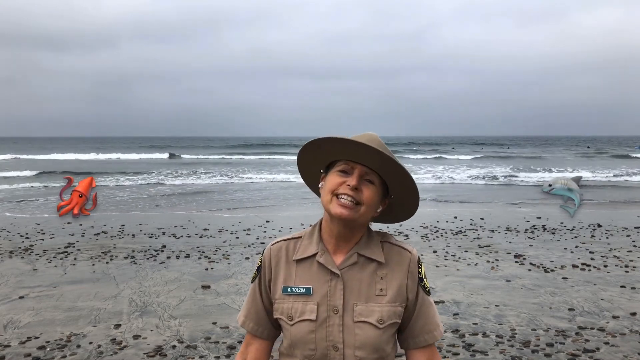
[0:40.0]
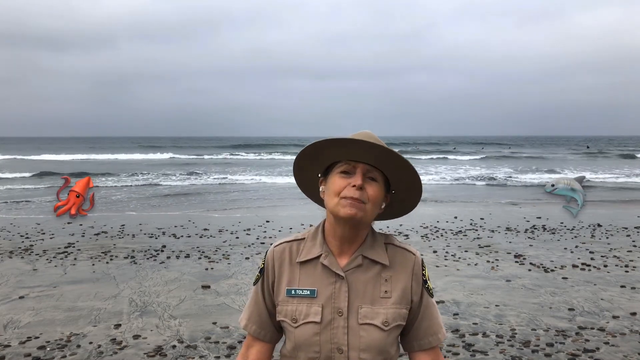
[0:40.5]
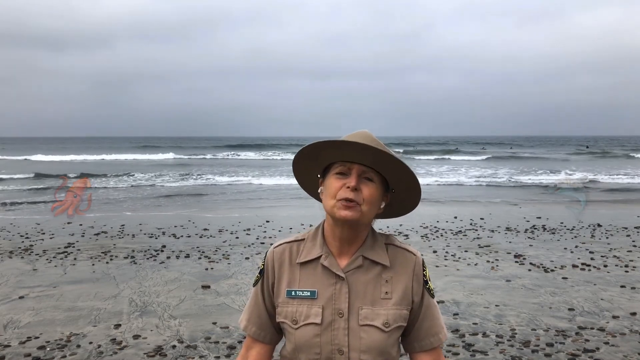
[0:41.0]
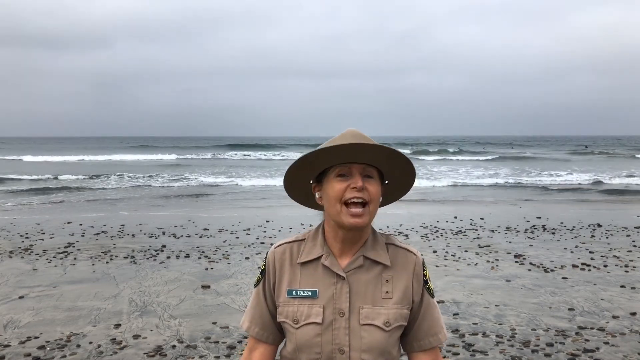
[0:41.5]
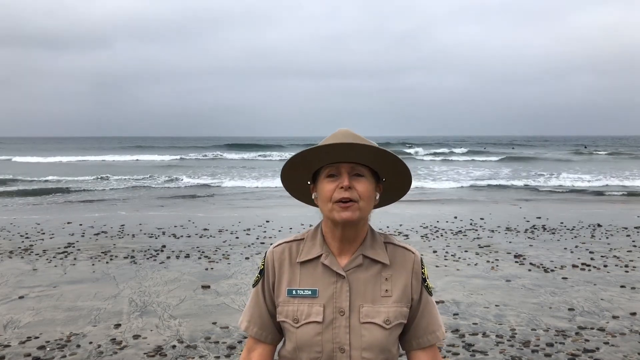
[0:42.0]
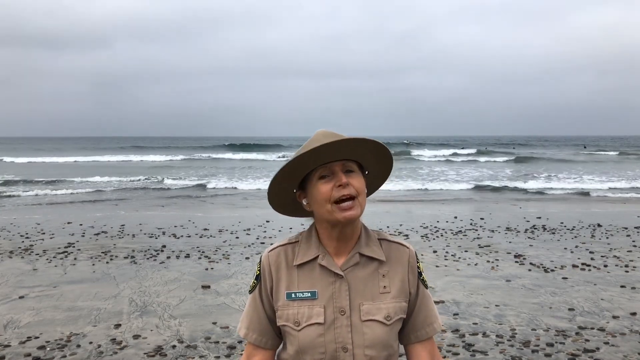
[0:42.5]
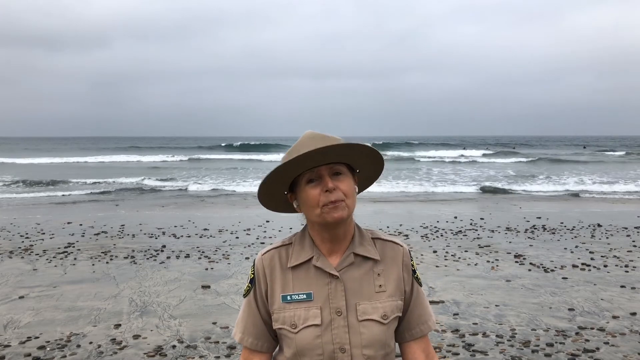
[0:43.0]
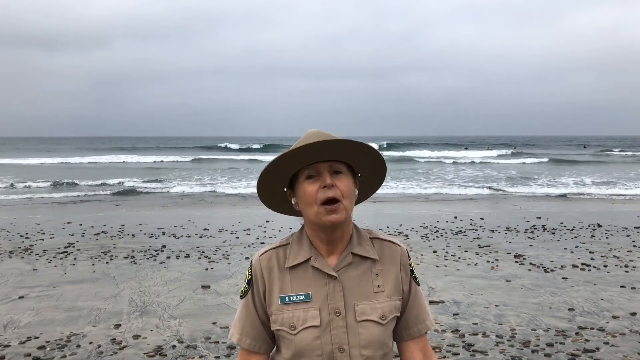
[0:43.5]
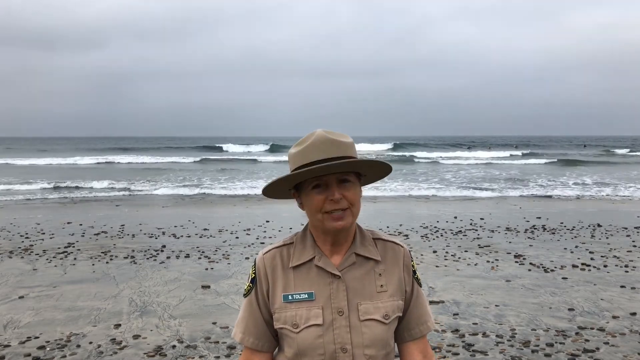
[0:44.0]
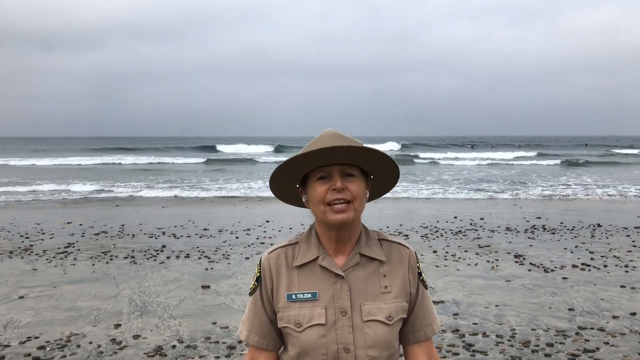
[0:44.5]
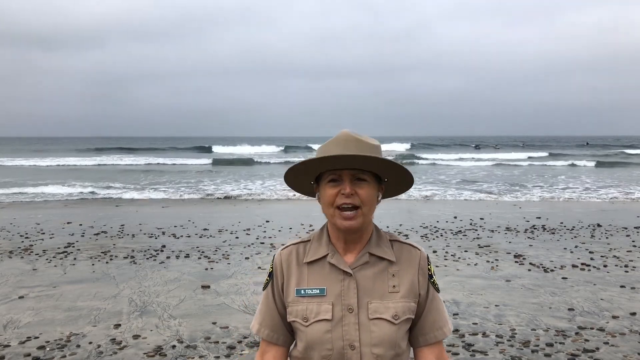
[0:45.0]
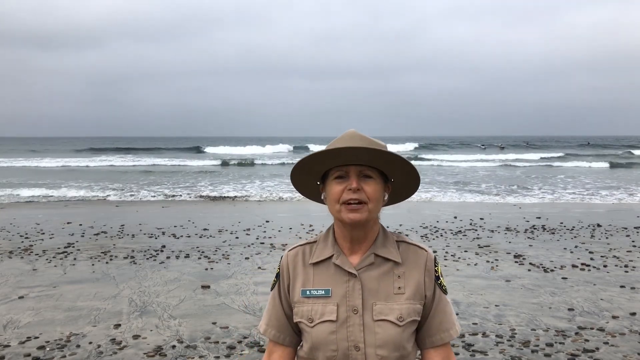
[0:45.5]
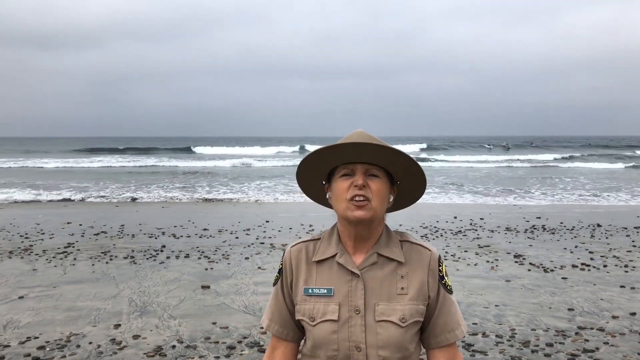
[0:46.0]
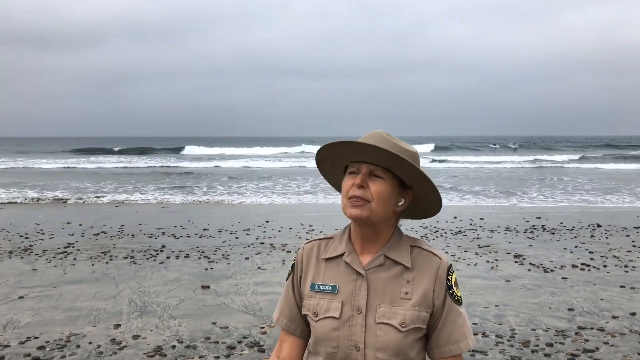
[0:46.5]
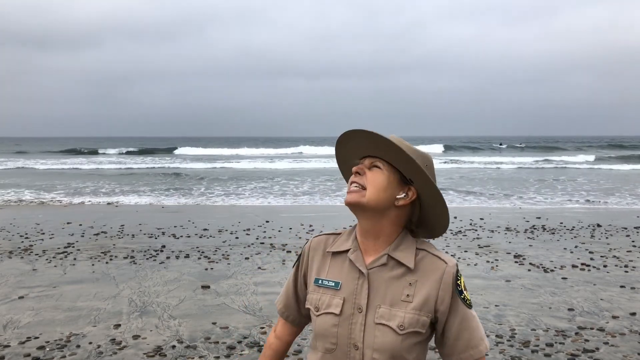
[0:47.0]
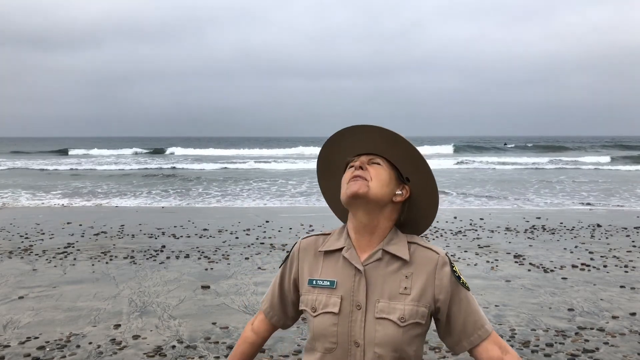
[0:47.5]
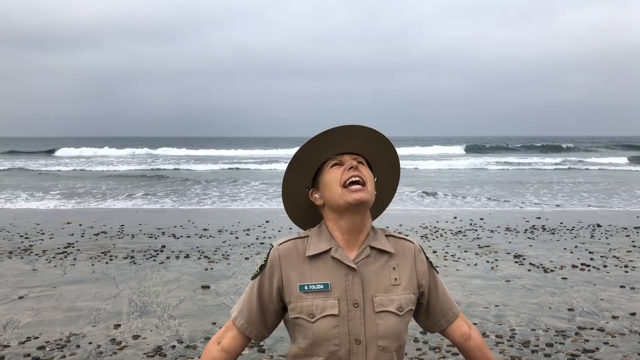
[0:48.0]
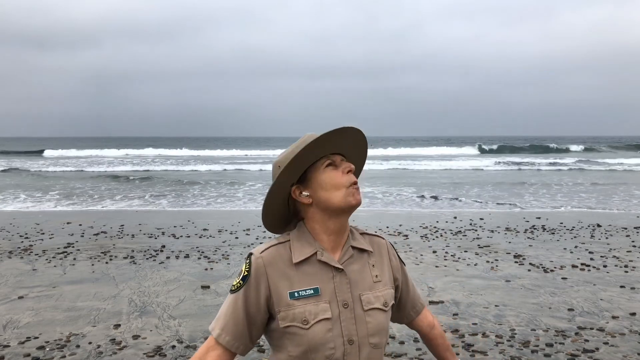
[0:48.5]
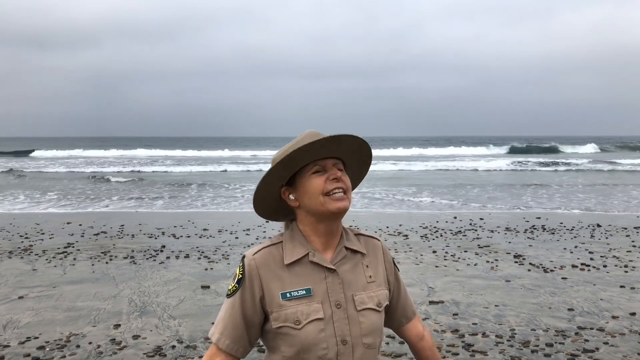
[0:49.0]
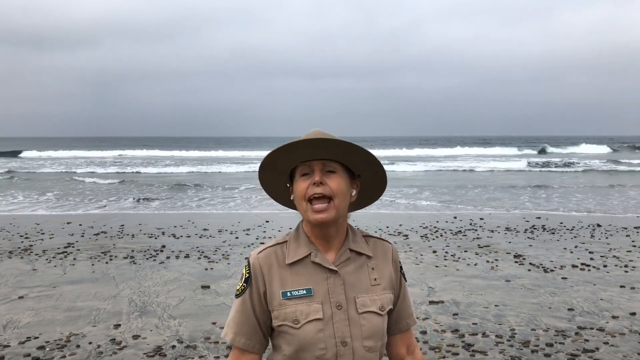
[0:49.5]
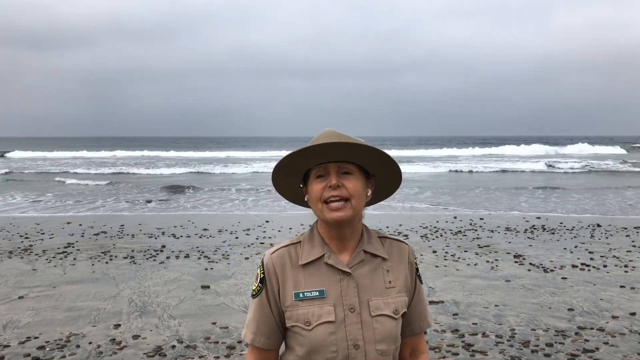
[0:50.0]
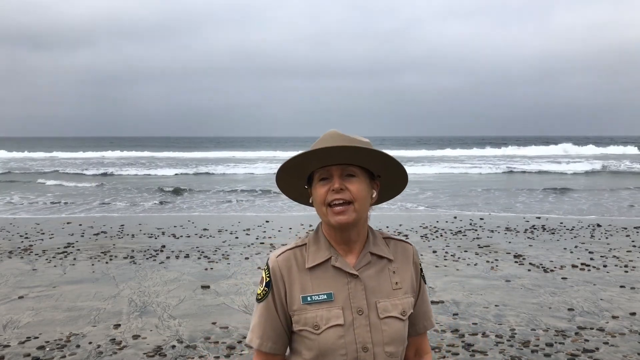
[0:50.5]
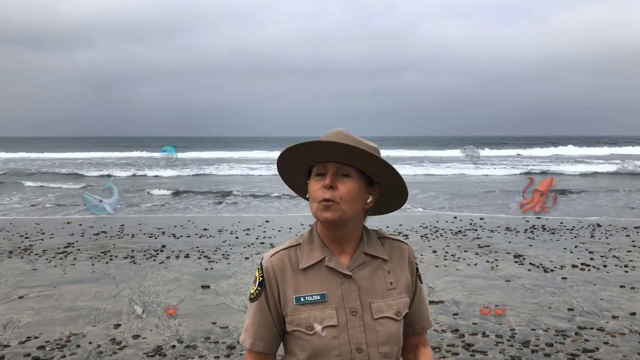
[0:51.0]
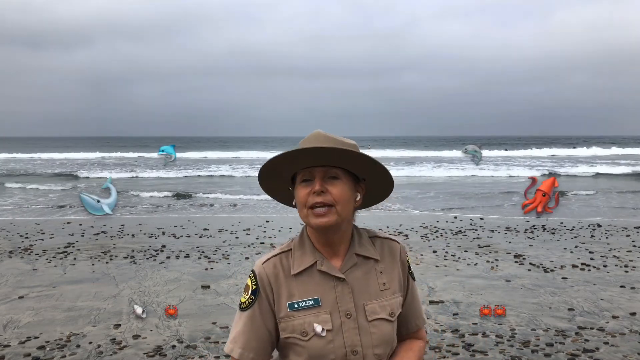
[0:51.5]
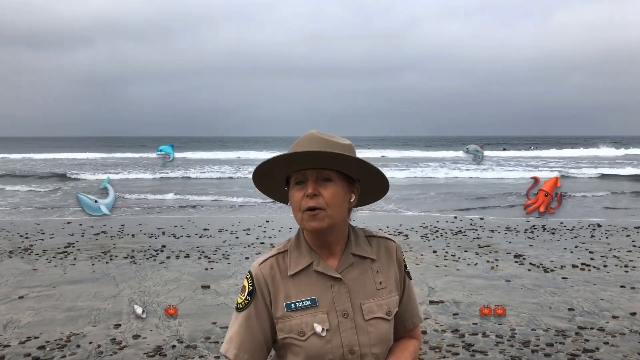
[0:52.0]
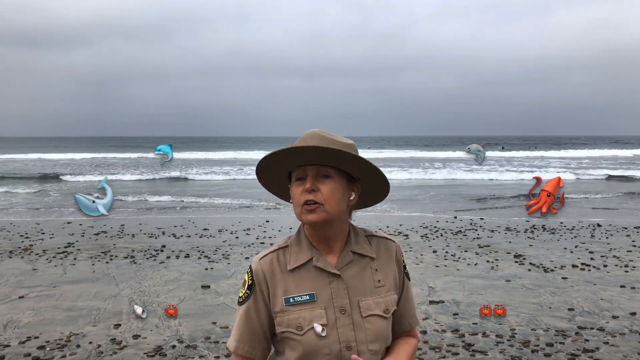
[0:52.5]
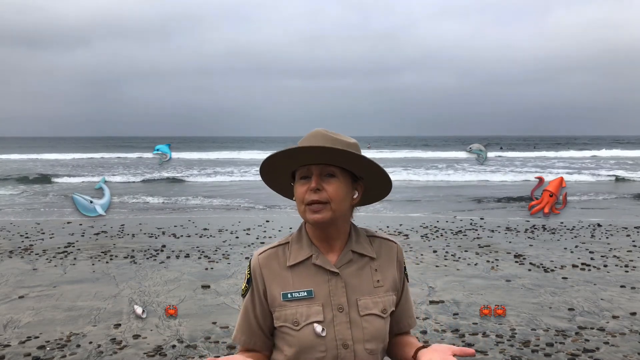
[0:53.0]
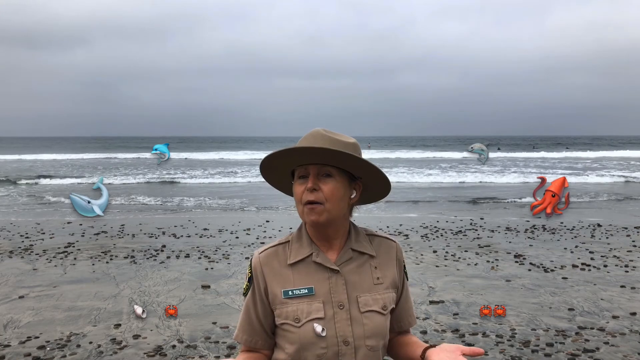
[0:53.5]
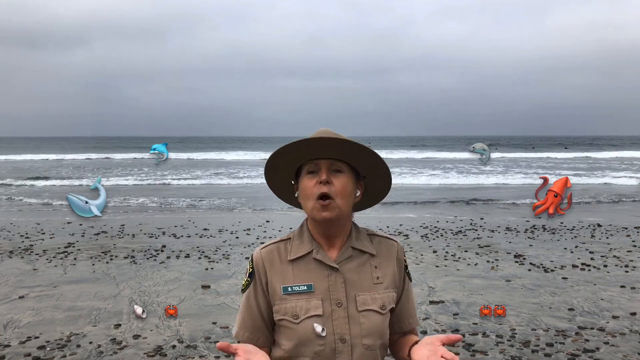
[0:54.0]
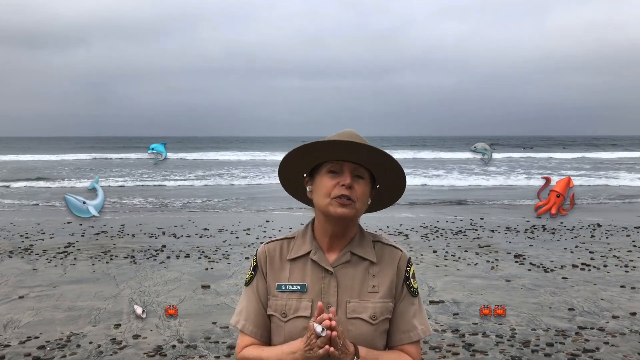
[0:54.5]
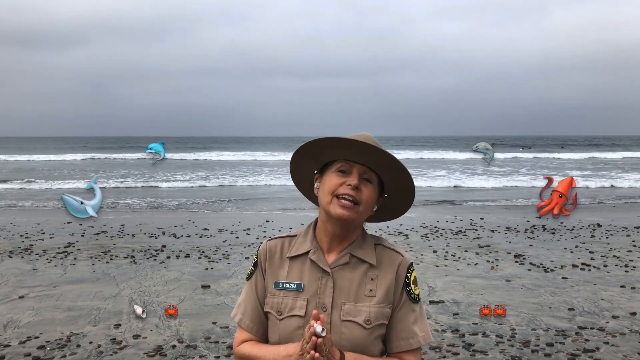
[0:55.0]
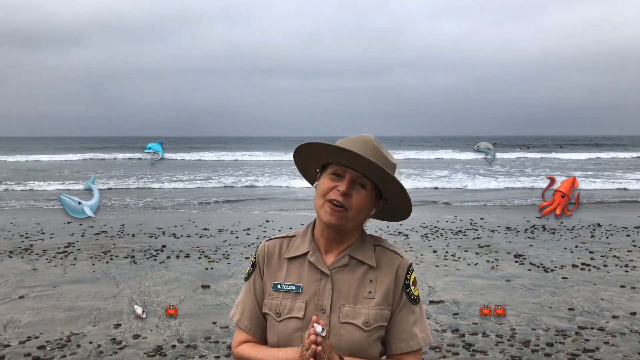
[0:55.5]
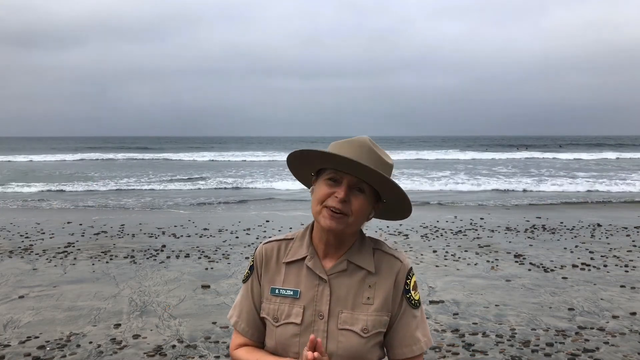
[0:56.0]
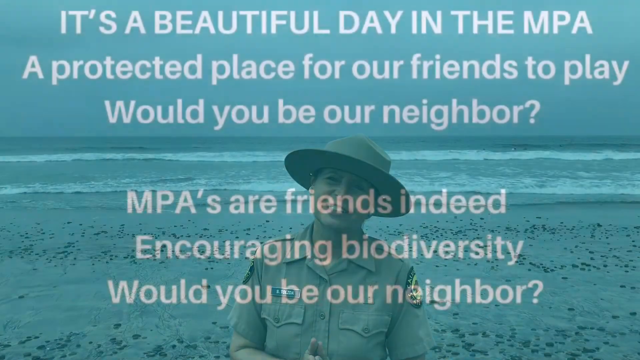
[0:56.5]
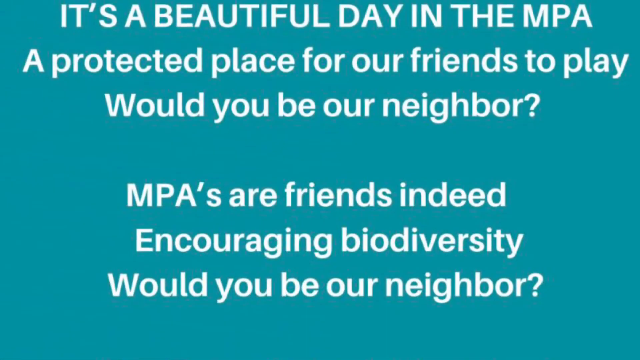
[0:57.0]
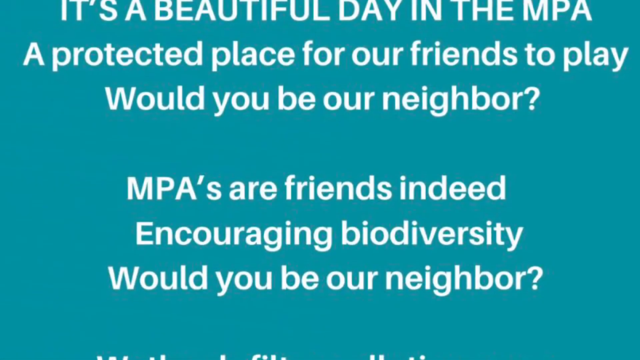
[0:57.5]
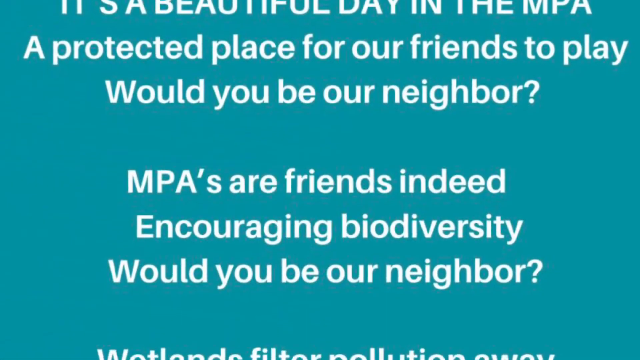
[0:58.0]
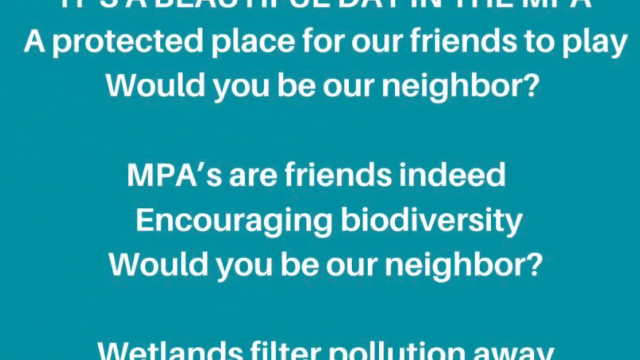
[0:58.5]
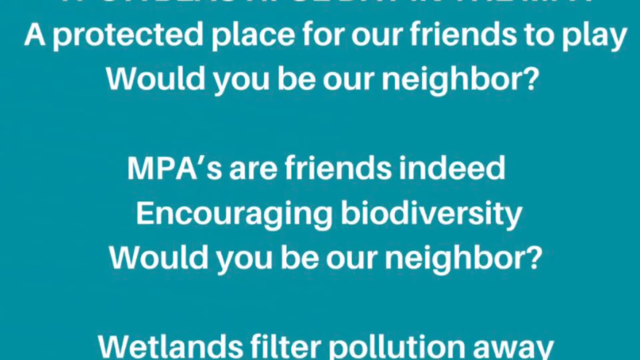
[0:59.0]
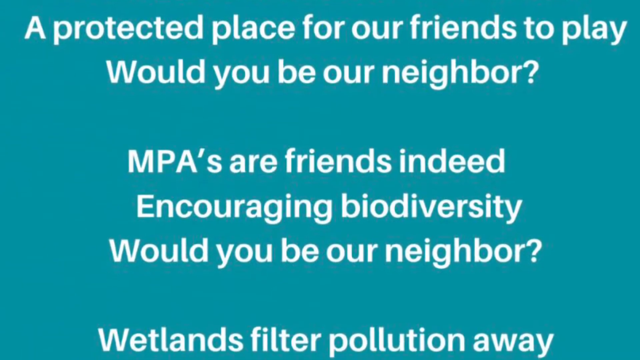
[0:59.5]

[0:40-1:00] Sandy stands on a beach with waves rolling in and out and a grey sky behind her. She seems to be talking about species found at sea, with a photo of a squid on her right-hand side and a photo of a shark on her left. As she talks, she looks up at the sky, maybe thinking about the weather; it looks like it is going to rain, the sky is grey, and the waves are getting more and more violent. Then a photo of a dolphin and a photo of a whale appear on her right side, followed by a photo of a squid and a photo of a shark on her left side. Next comes a blue screen with white words reading "It is a beautiful day in the MPA a protected place for our friends to play would you be our neighbor? MPAs are friends indeed encouraging biodiversity would you be our neighbor?"